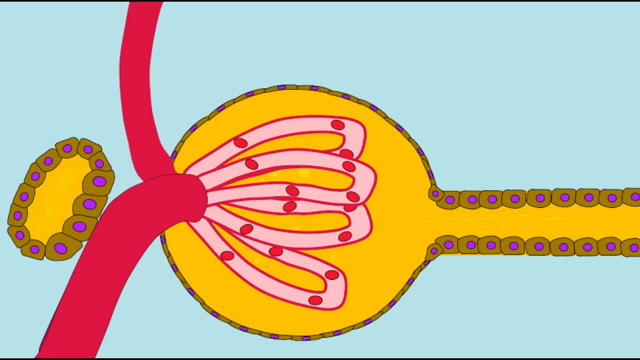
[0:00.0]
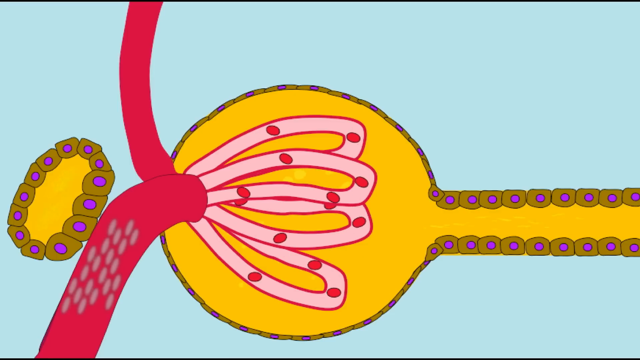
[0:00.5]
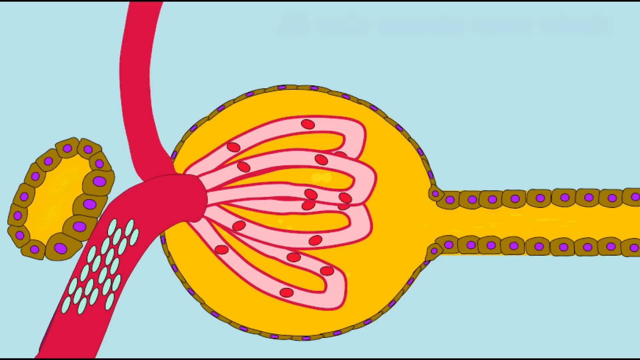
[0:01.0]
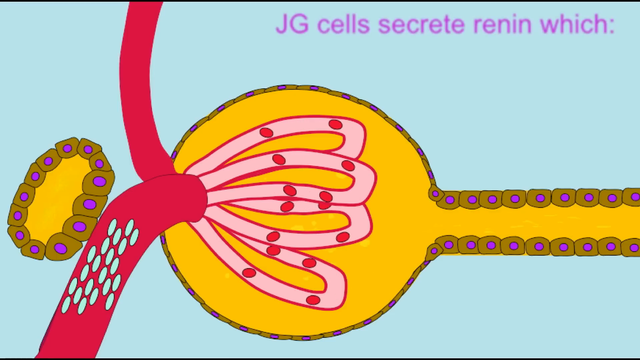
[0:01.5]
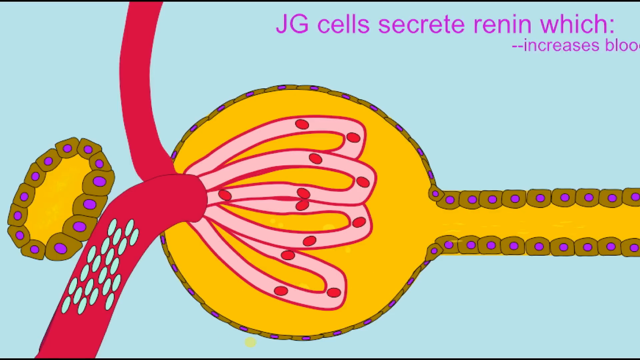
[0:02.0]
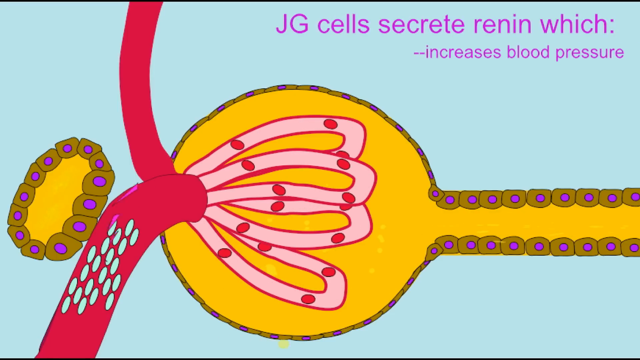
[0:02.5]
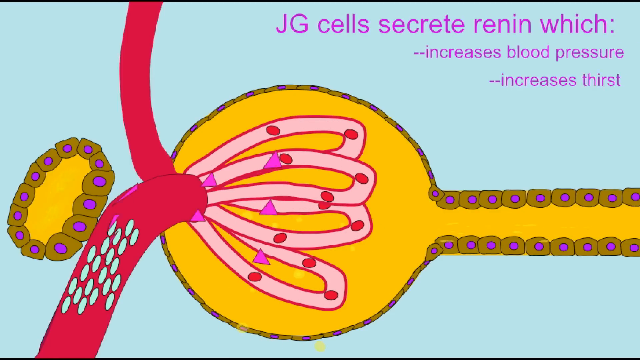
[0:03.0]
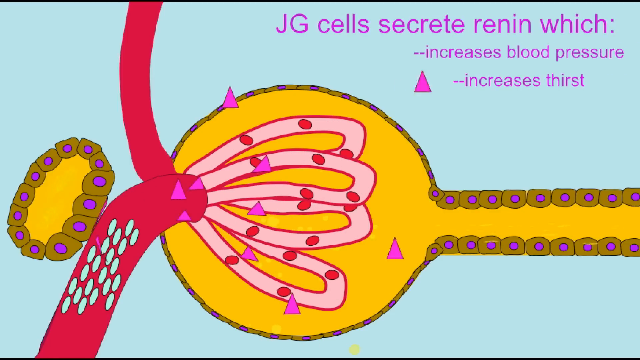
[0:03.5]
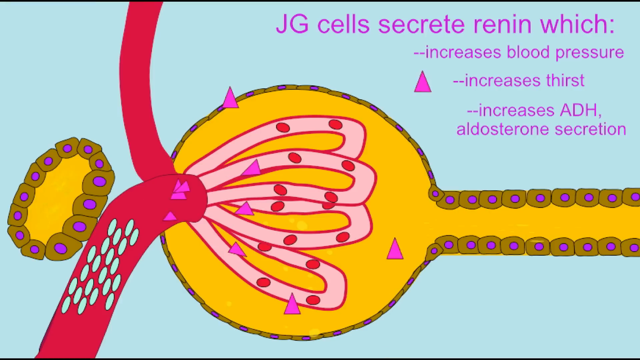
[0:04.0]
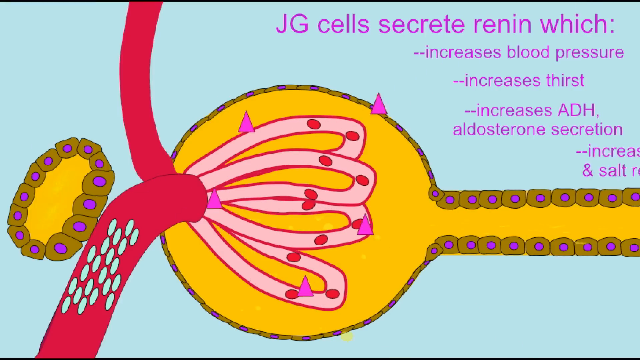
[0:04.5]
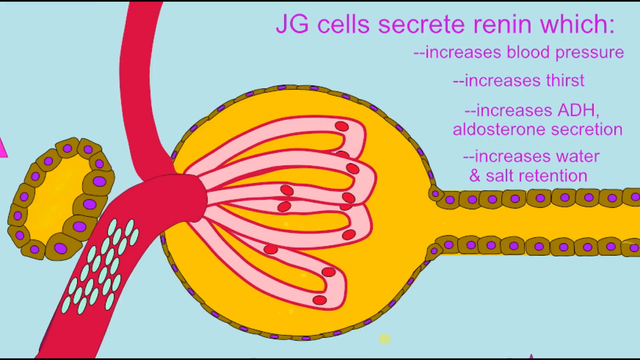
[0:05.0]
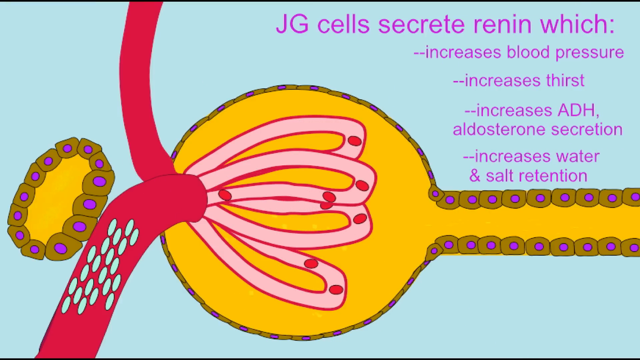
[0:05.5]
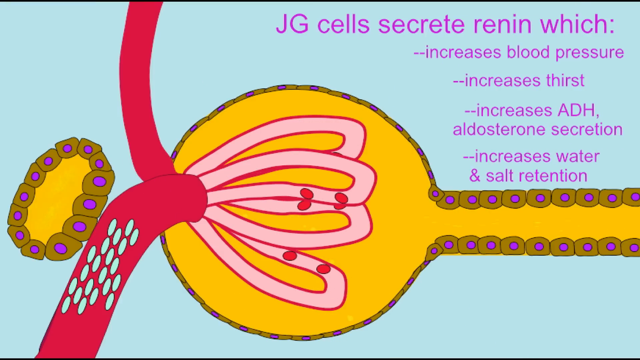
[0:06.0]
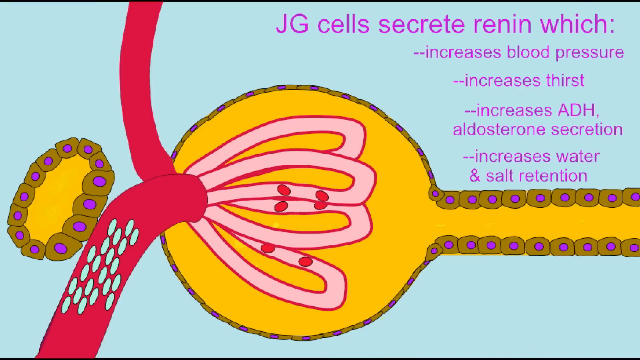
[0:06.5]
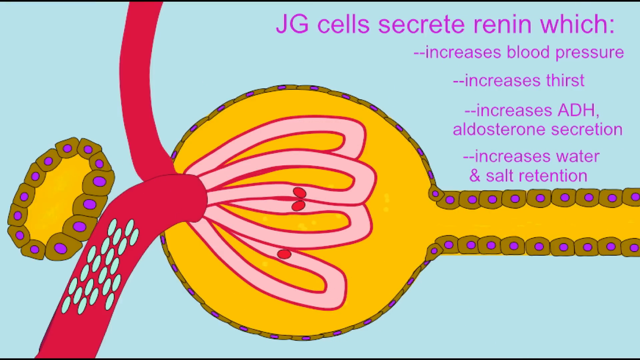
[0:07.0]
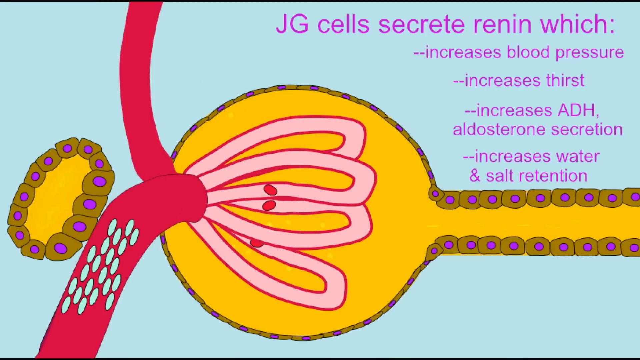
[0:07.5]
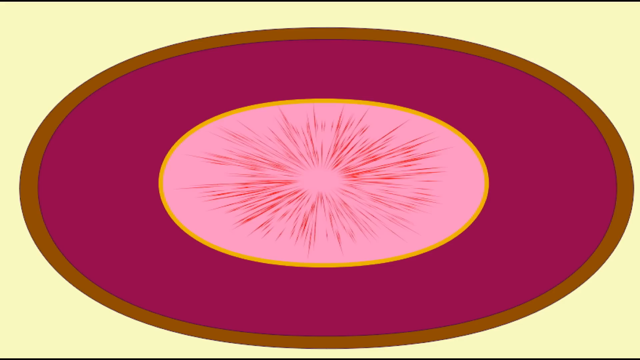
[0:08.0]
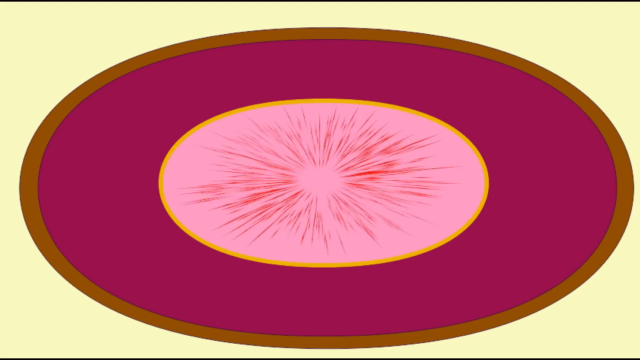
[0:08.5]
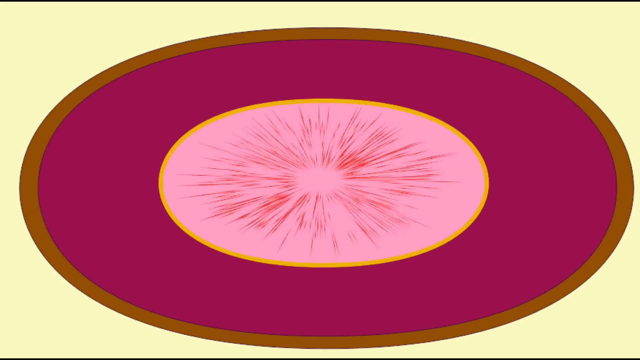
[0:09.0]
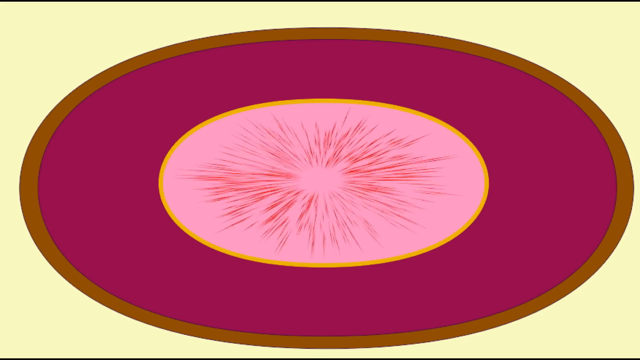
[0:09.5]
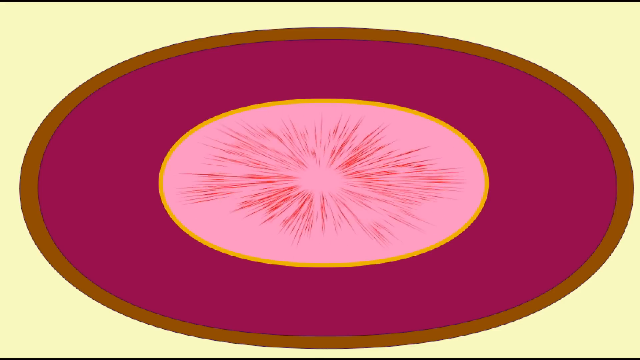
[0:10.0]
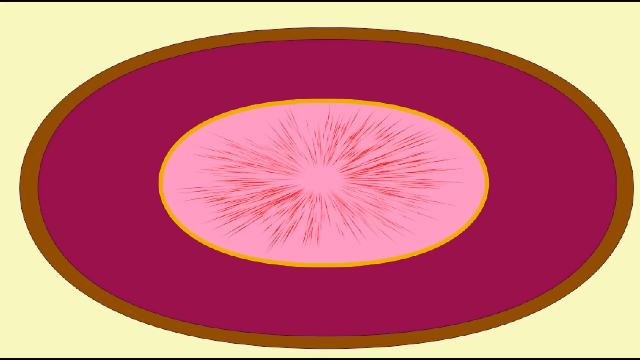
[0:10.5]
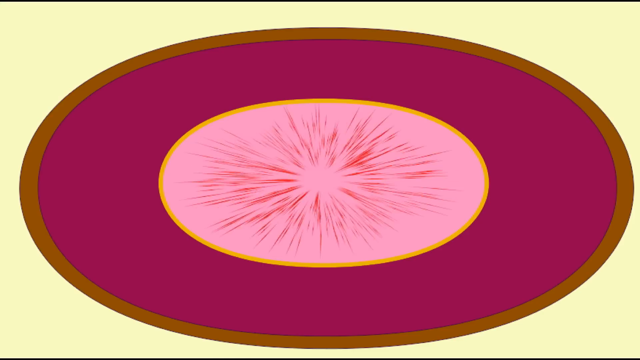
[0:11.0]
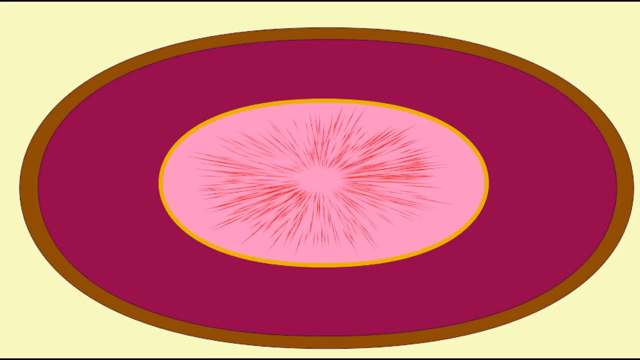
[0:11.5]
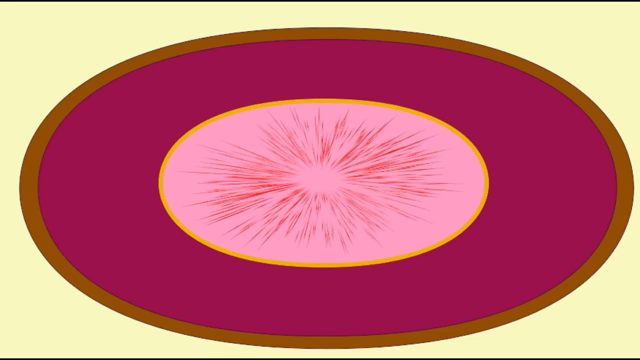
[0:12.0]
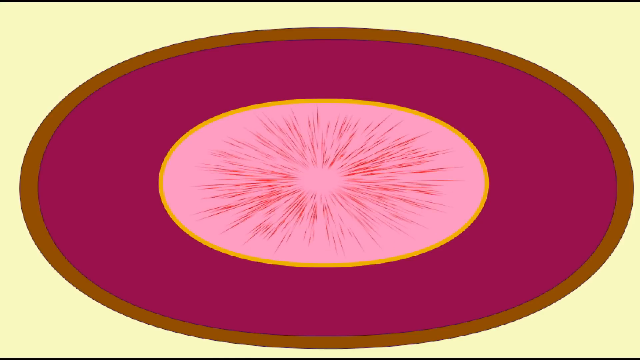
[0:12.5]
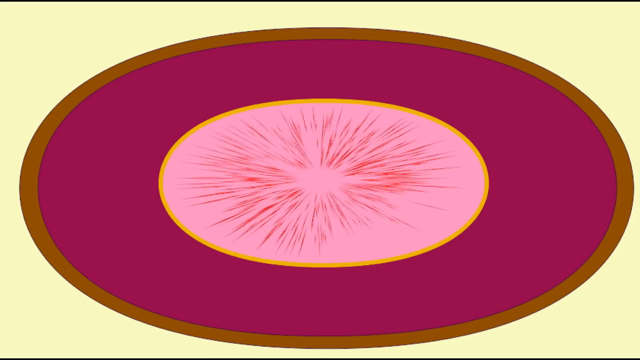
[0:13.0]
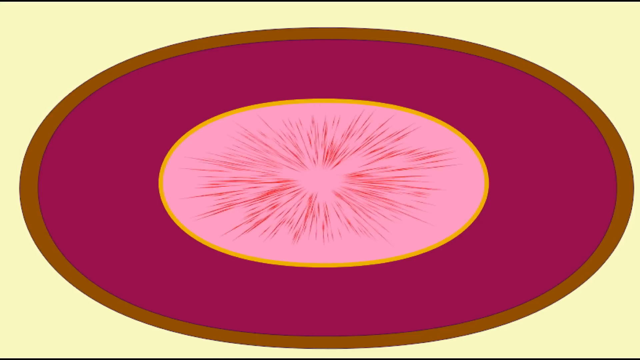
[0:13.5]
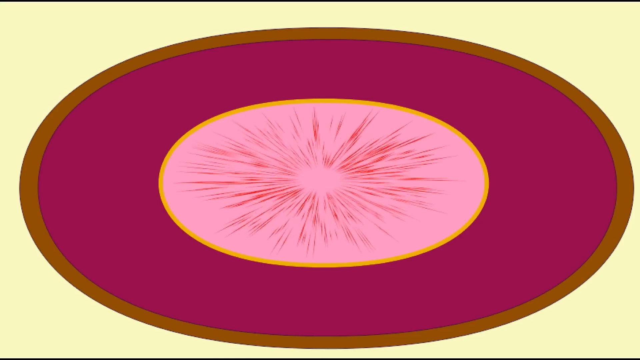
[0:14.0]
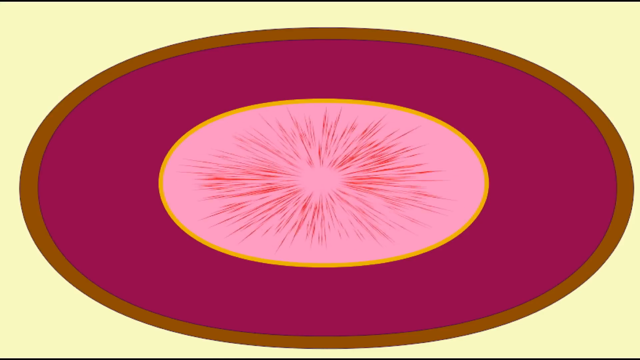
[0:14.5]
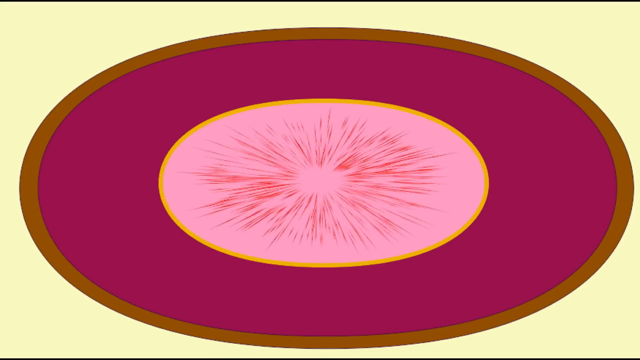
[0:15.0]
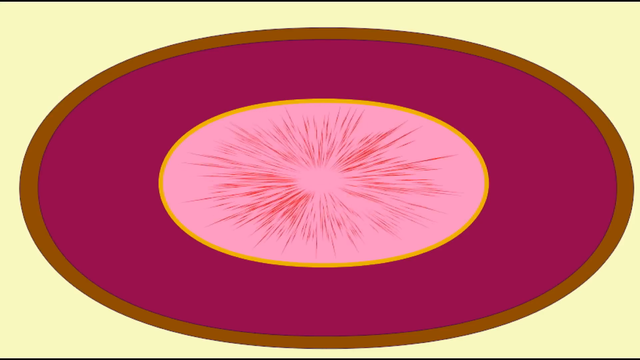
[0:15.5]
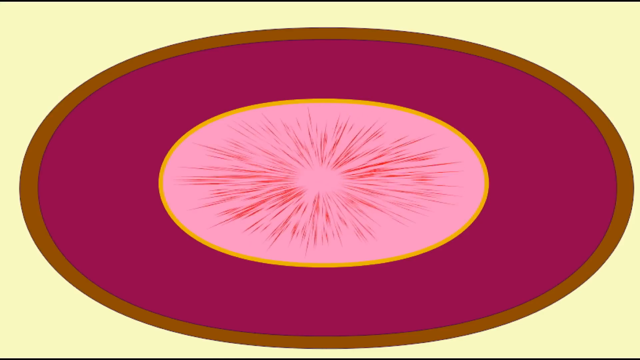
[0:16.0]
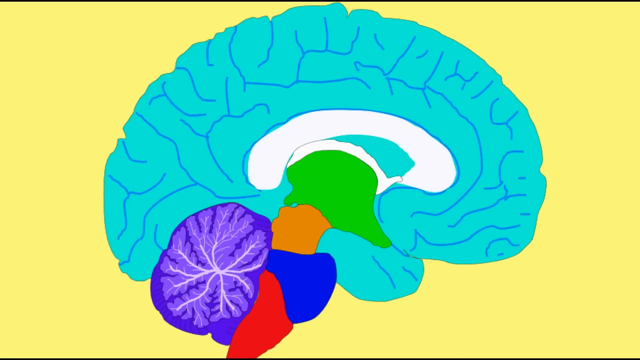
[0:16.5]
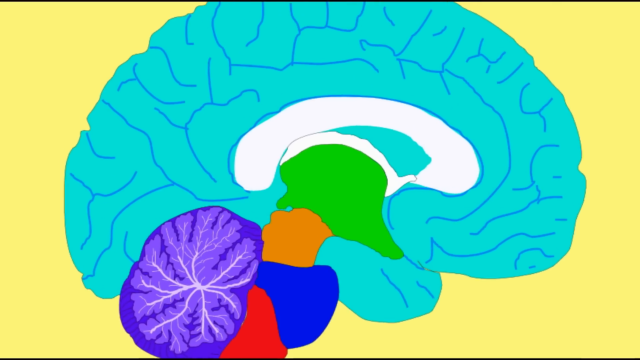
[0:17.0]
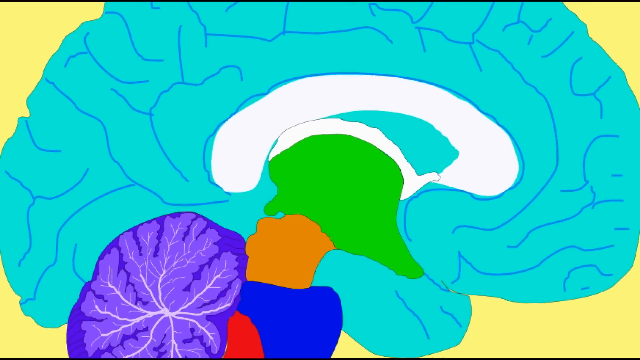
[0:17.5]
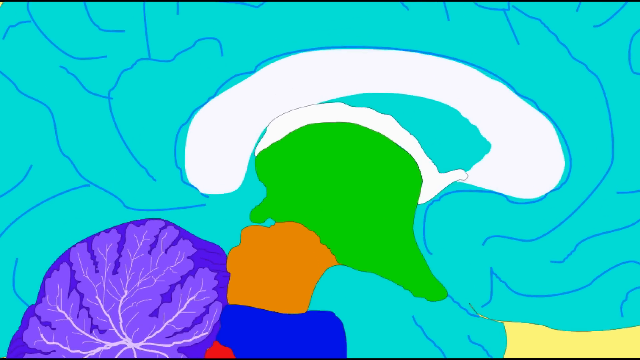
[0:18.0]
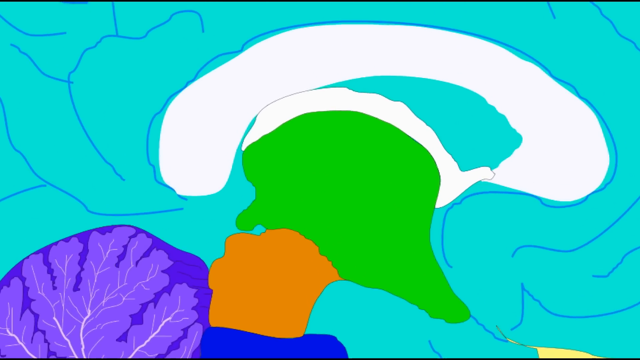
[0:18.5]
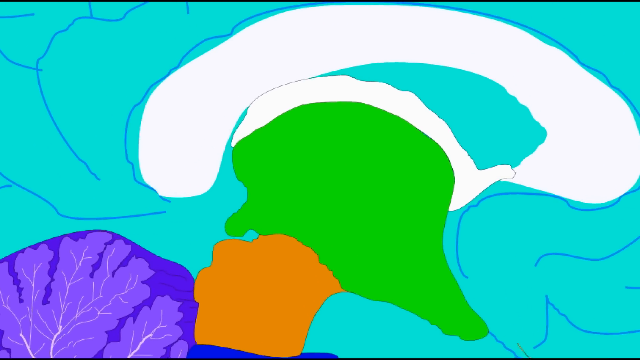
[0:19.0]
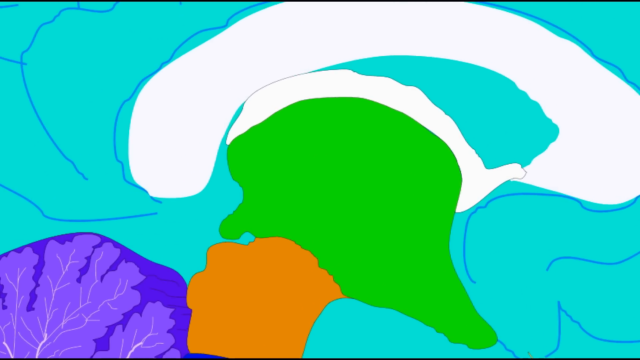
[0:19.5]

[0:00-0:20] The video opens on what looks like a cell. The cell is round, with a long rectangle extending out of it, and its middle is yellow. To the left of it is another circular cell, also yellow, with little circles around its border; the border is a darker yellow, with purple in the middle. The cell in the middle contains pink and red objects, and it extends out like a red blood vessel. Little dots move throughout the object. The background of the graphic is blue. Blue dots are visible on the blood vessel, along with little triangles going out of it, and they move around. Next comes a giant oval with a black, blue and brown background and pink in the middle. Outside the pink is a yellow line and then a black line. In the middle, red lines flash, and there is a solid hole at the center; the lines in the middle keep moving around. A brain then appears. It is blue, with blue lines, and its different parts are visible.